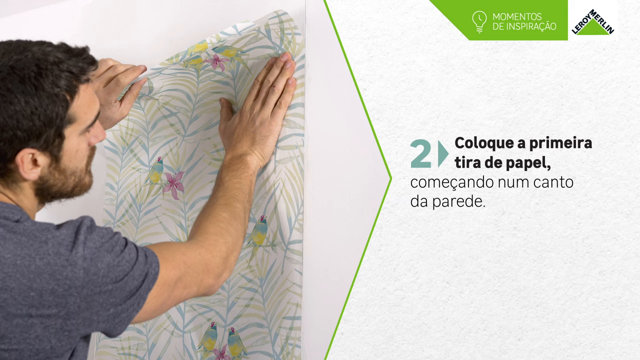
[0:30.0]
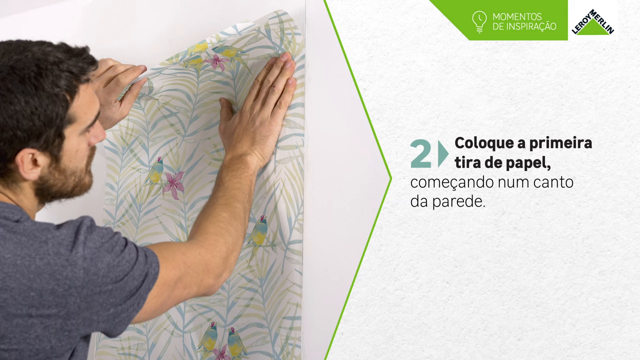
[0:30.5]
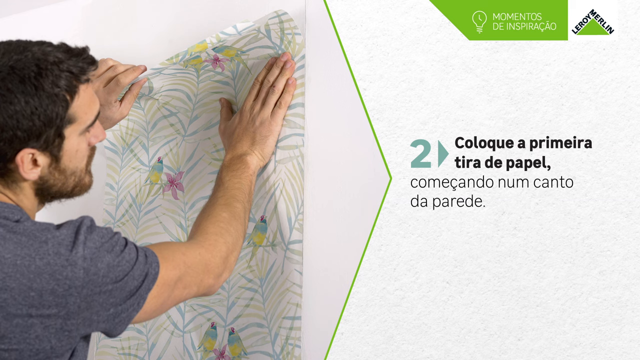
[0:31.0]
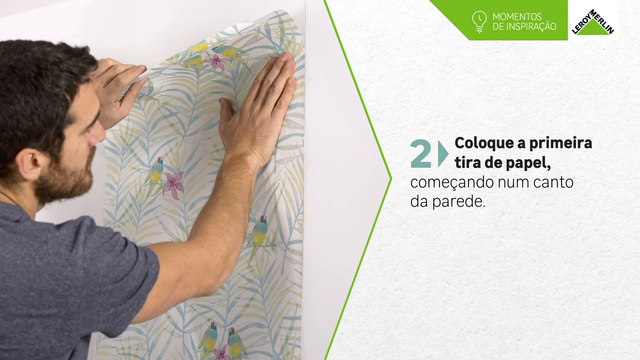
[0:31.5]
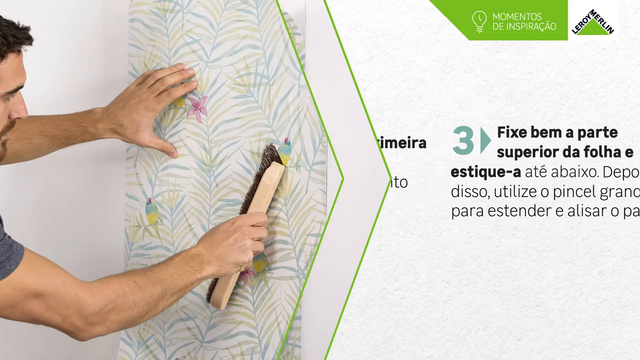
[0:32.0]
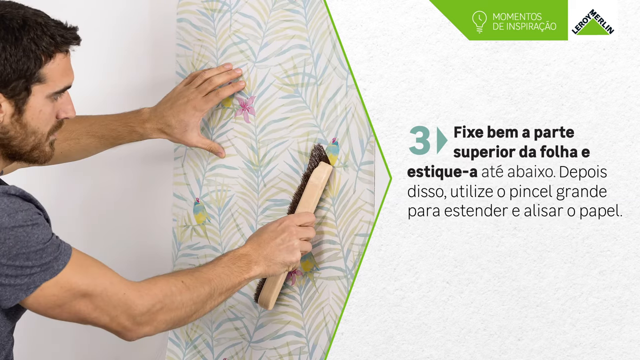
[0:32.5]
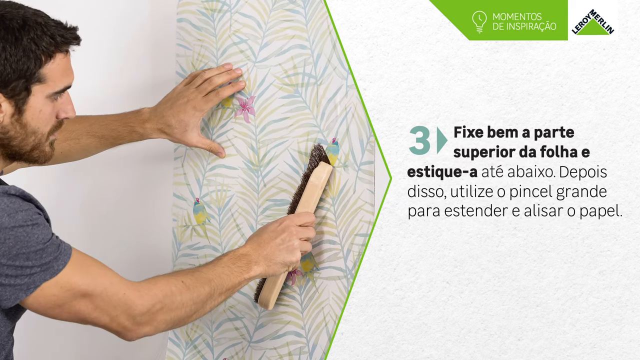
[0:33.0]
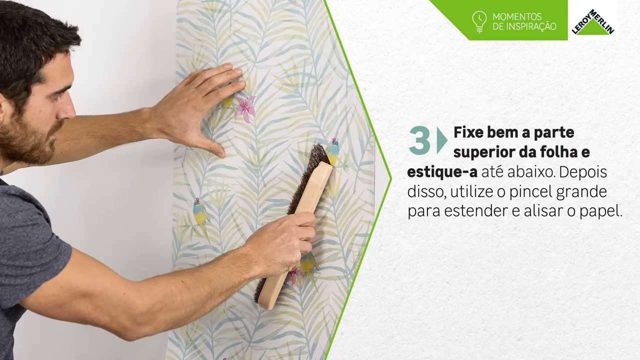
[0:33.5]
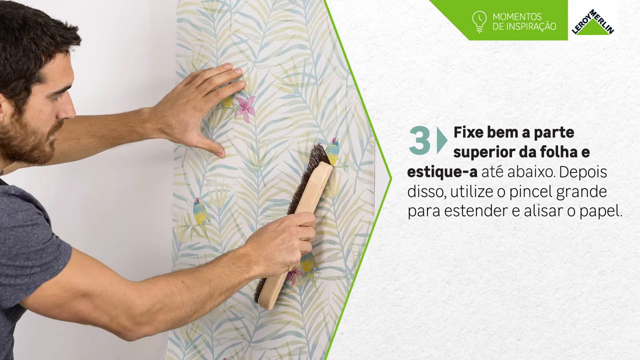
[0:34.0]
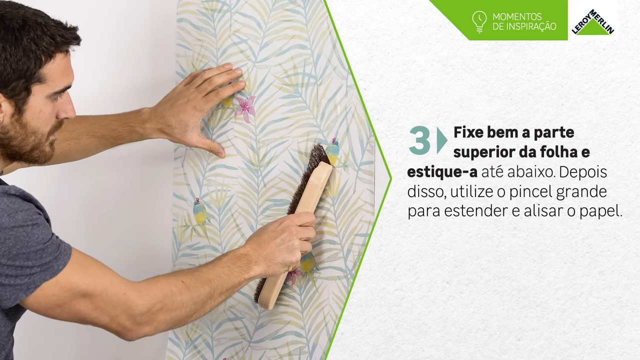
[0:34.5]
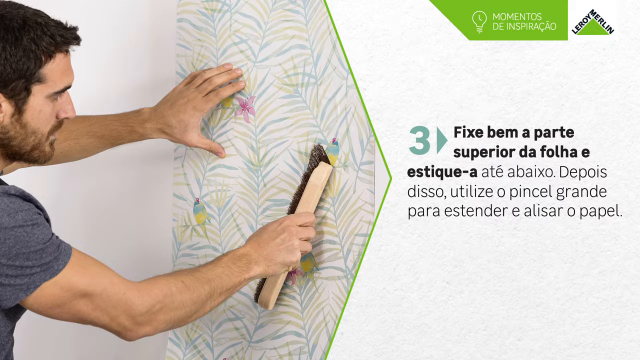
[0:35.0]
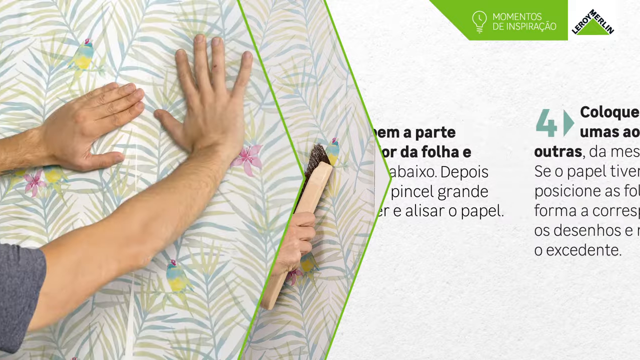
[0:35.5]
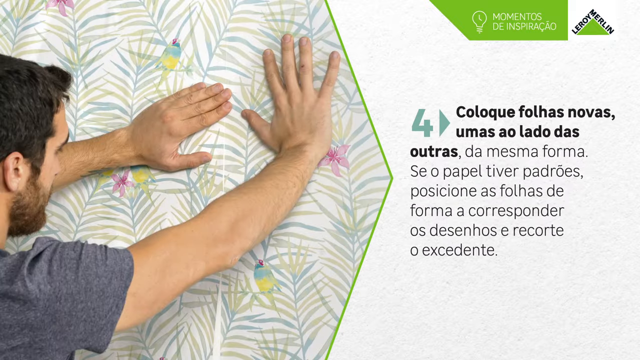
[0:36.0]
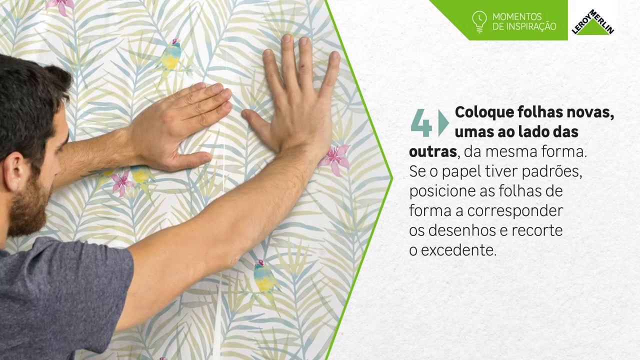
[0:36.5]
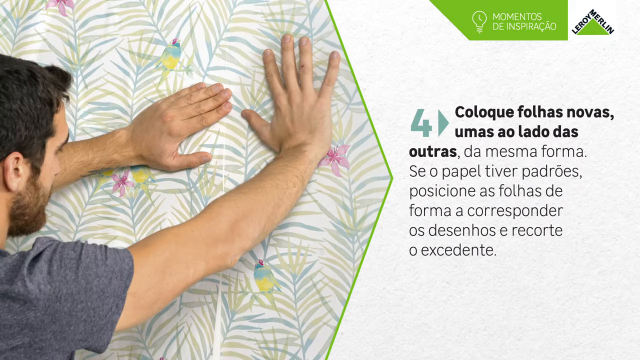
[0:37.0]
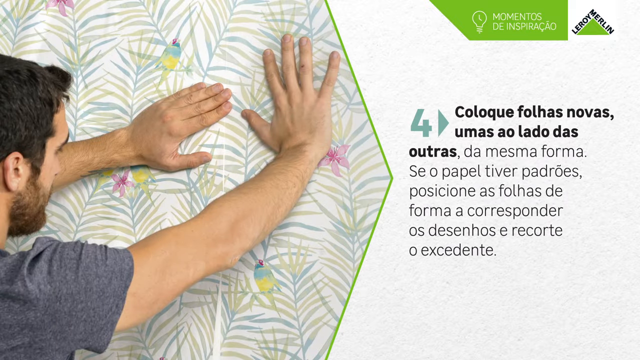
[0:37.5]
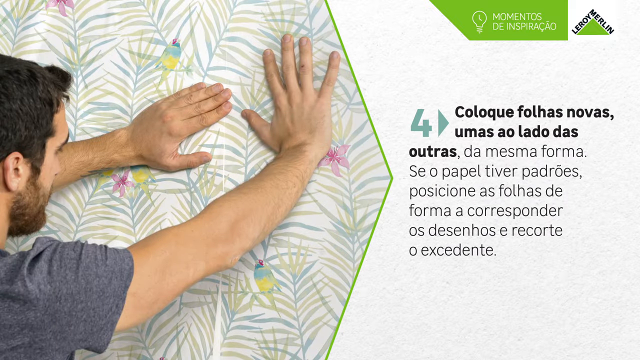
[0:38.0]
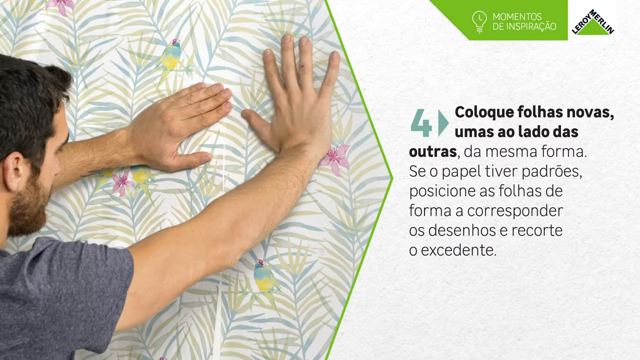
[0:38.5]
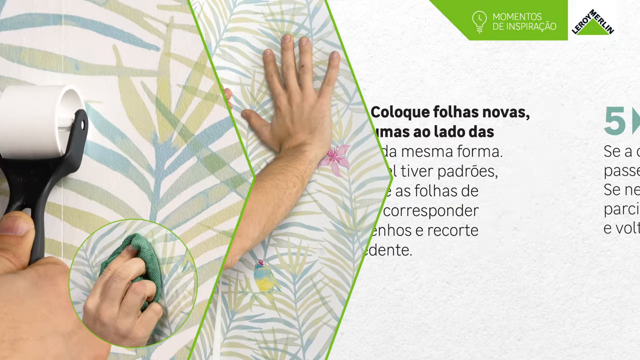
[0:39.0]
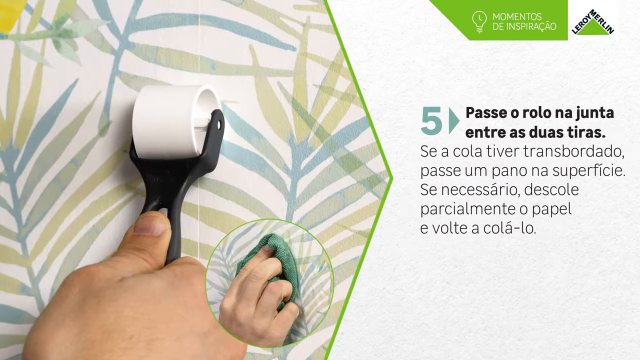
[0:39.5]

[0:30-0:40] Step two continues, showing the wallpaper being aligned to the corners of the wall and lined up, then smoothed neatly onto the wall with a brush. Step three follows, then step four, which shows adding the next row of paper and aligning it to repeat the process. The step four instructions are on the right-hand side, while a man uses his hands to press the wallpaper neatly onto the wall. Step five shows the roller being used to press the paper smoothly and aligned onto the wall. Throughout steps two to five, the steps appear in words on the right, and the man installing the wallpaper is shown on the left side of the video.